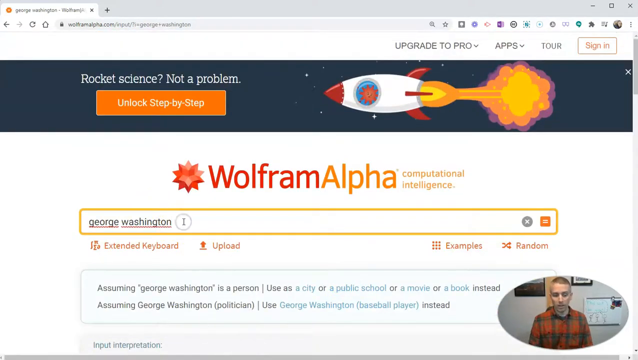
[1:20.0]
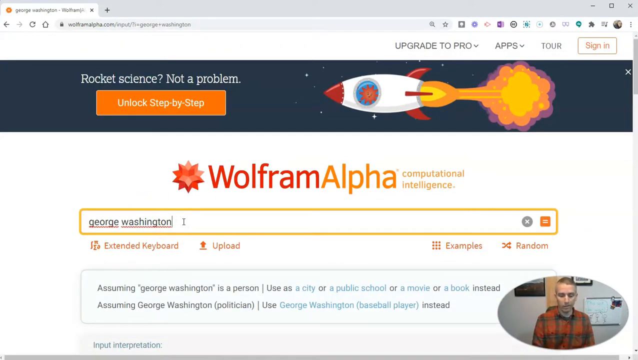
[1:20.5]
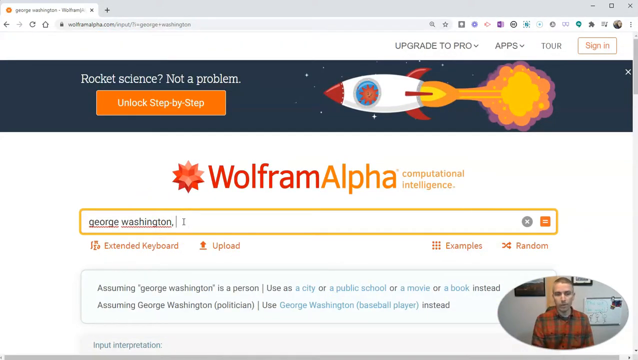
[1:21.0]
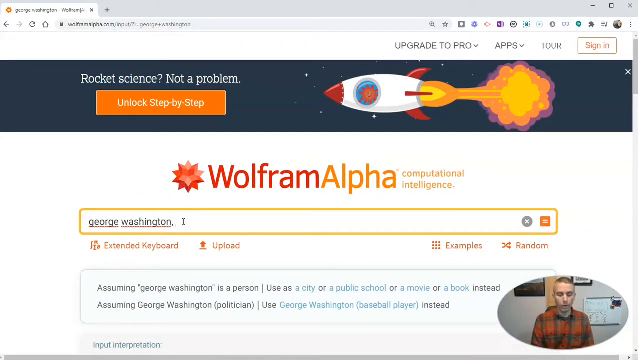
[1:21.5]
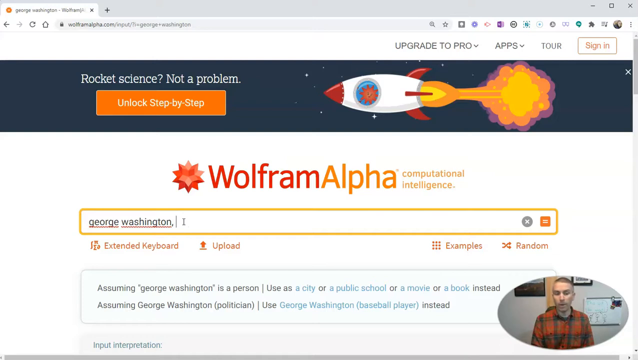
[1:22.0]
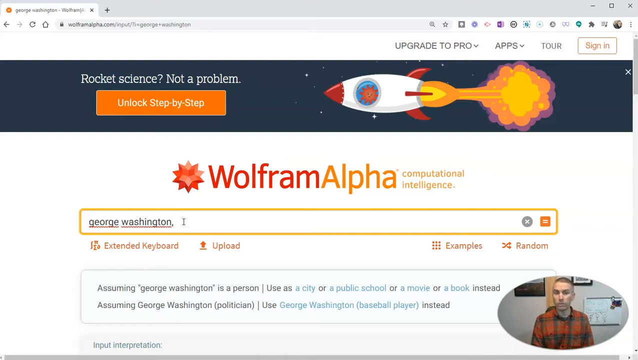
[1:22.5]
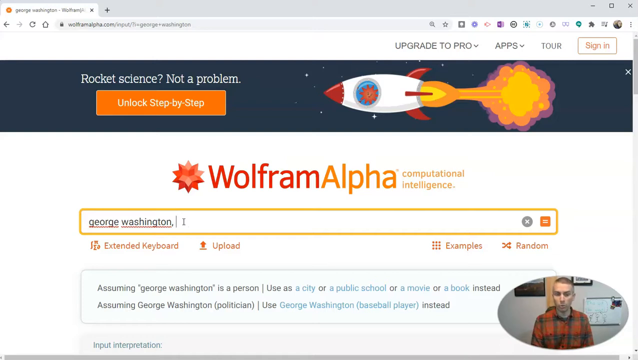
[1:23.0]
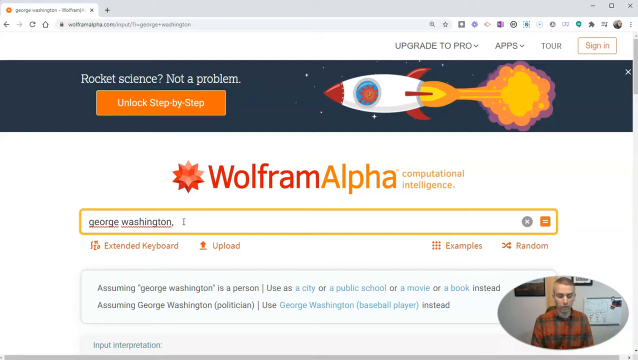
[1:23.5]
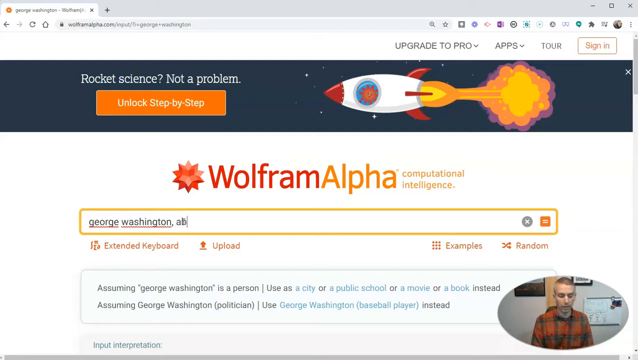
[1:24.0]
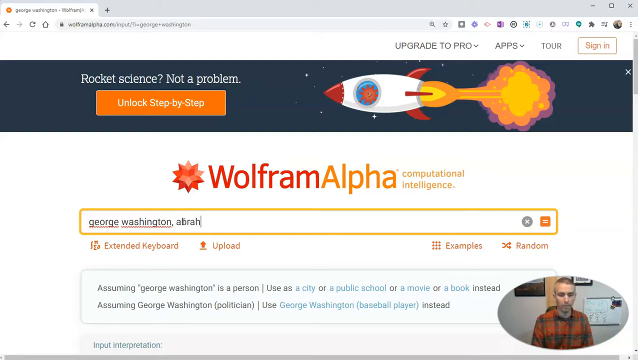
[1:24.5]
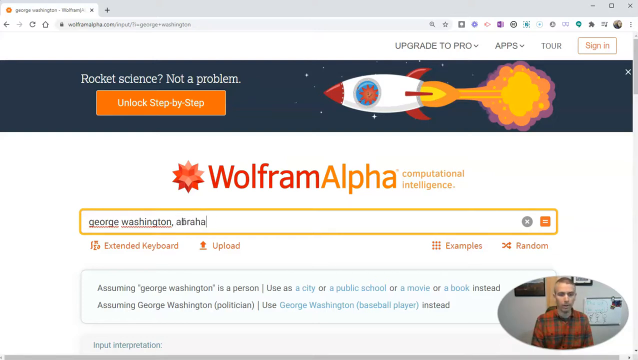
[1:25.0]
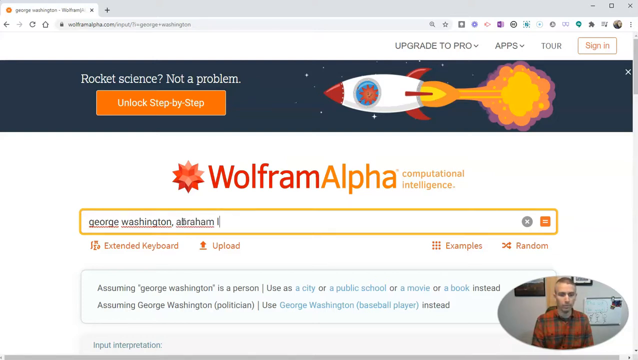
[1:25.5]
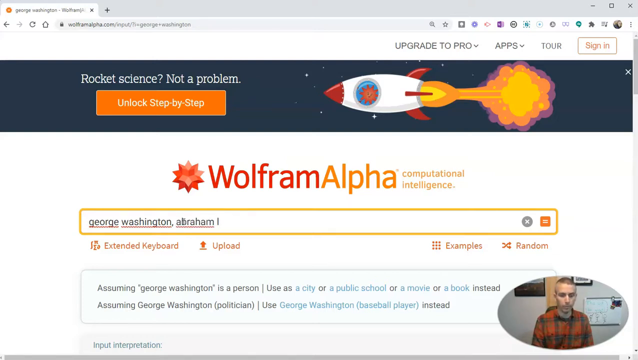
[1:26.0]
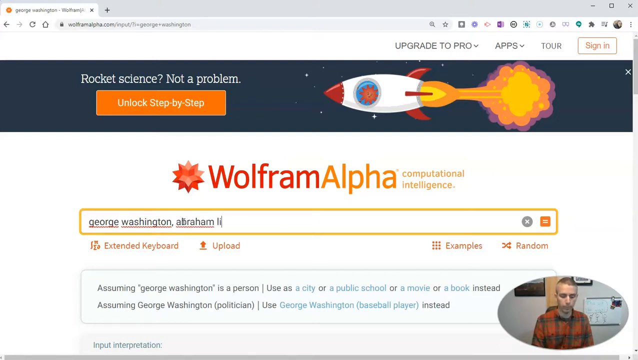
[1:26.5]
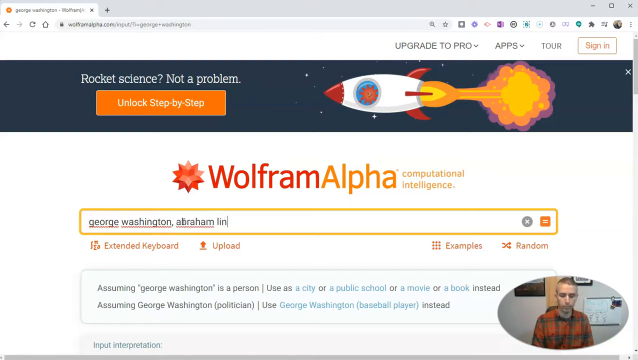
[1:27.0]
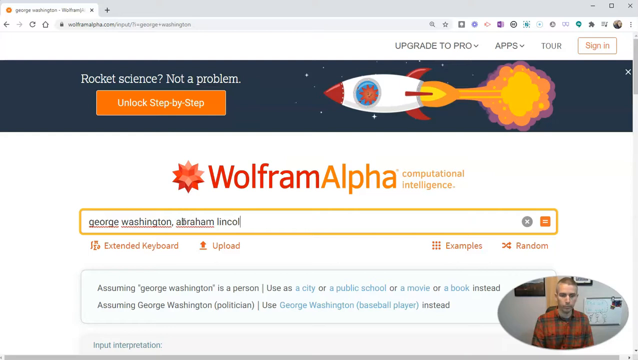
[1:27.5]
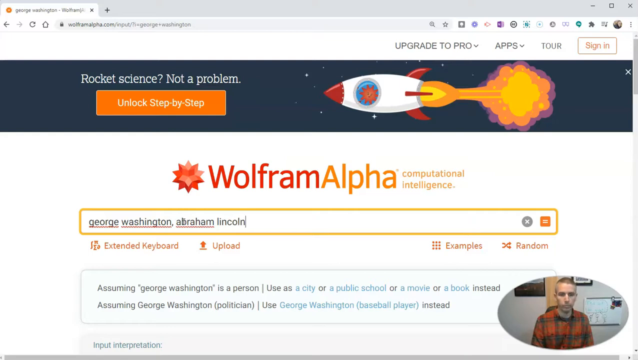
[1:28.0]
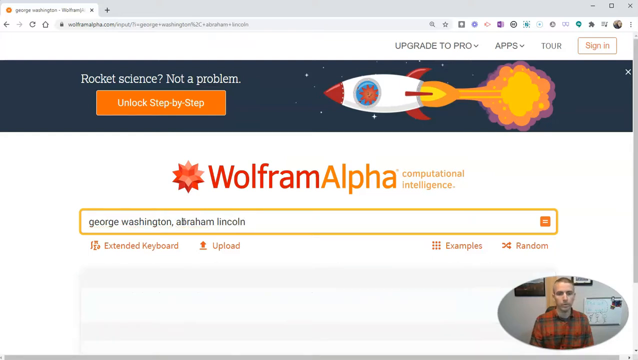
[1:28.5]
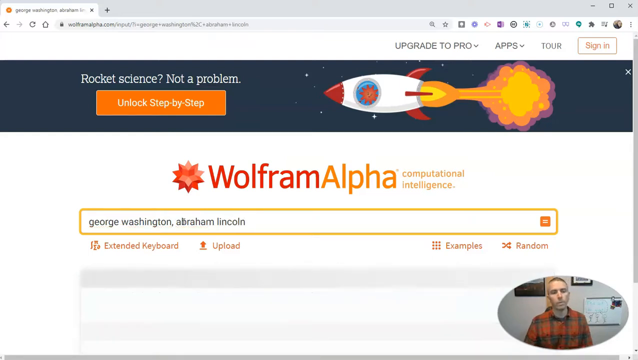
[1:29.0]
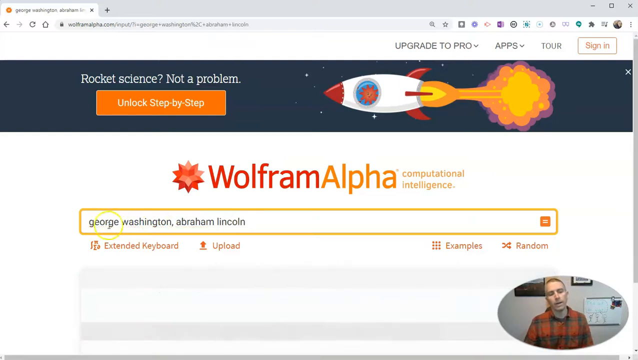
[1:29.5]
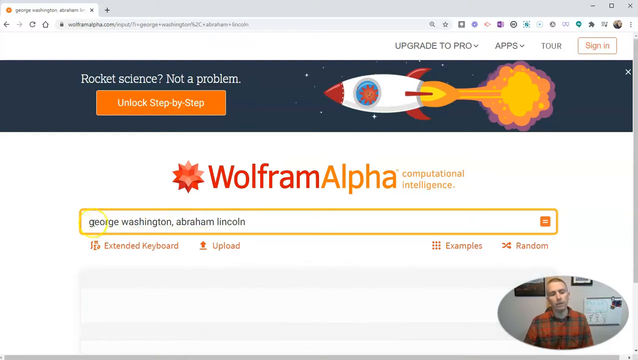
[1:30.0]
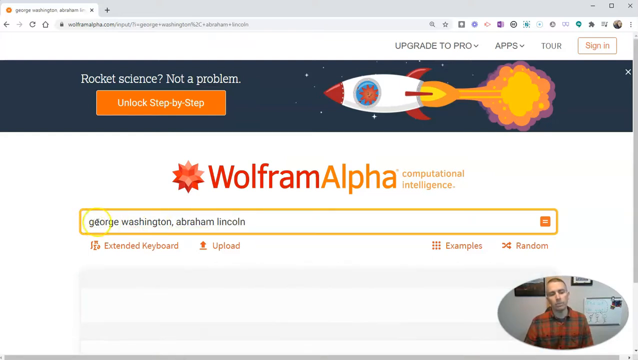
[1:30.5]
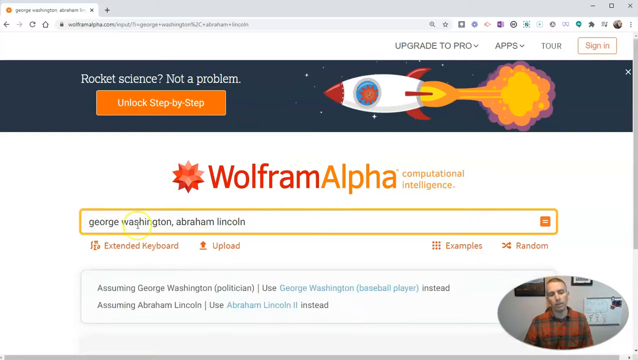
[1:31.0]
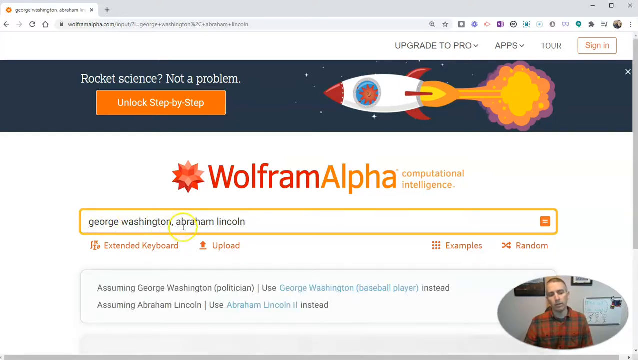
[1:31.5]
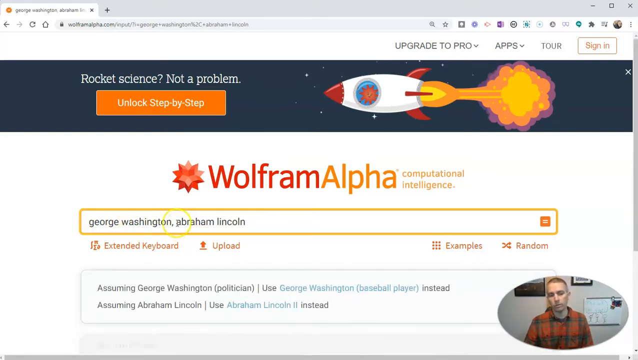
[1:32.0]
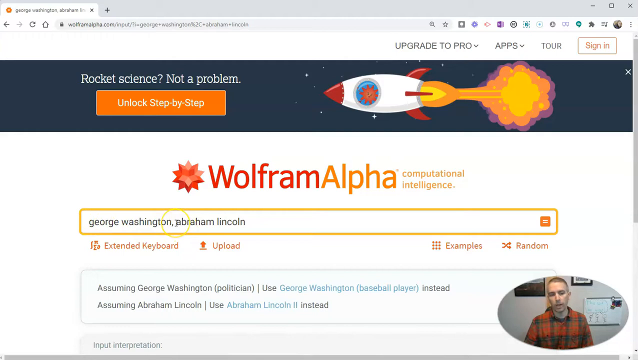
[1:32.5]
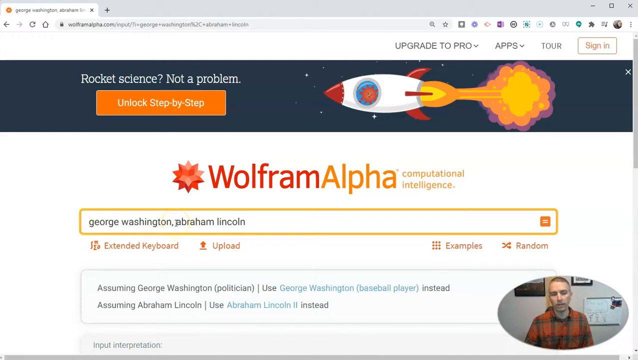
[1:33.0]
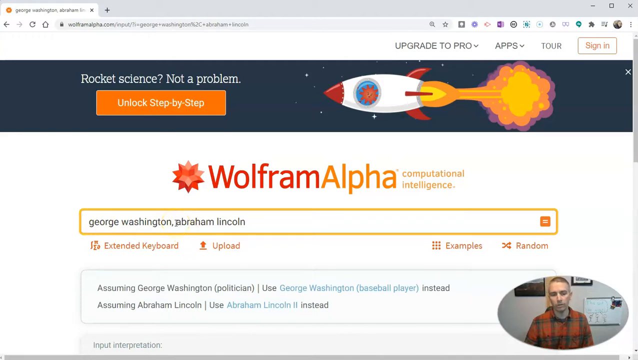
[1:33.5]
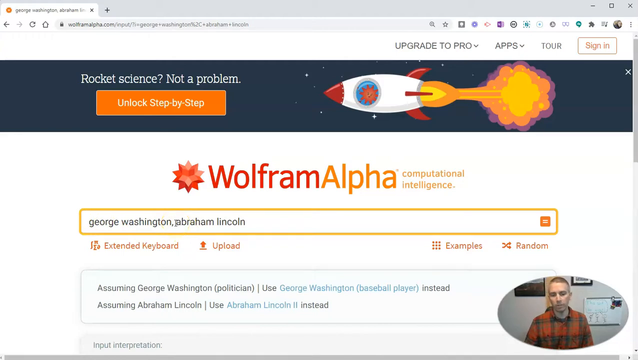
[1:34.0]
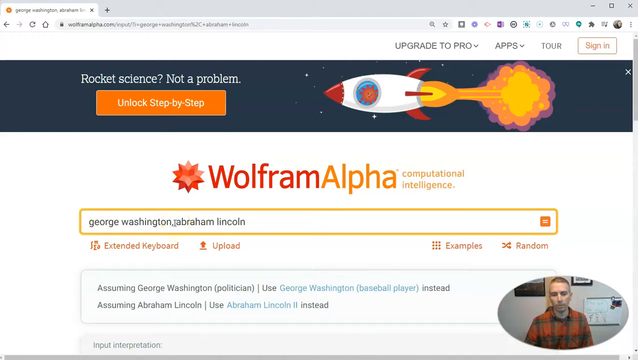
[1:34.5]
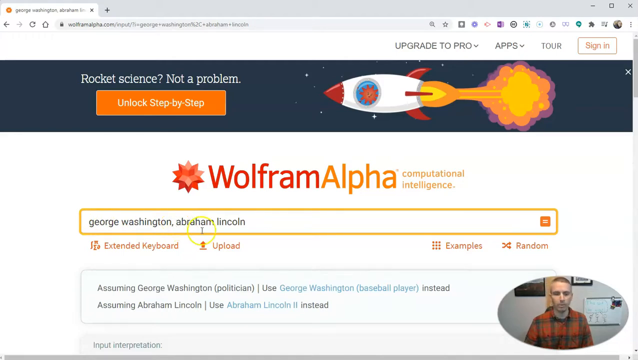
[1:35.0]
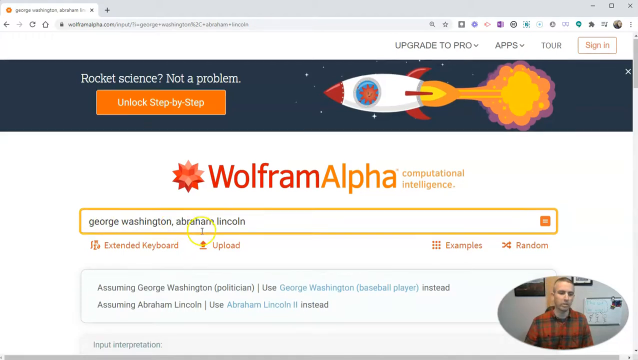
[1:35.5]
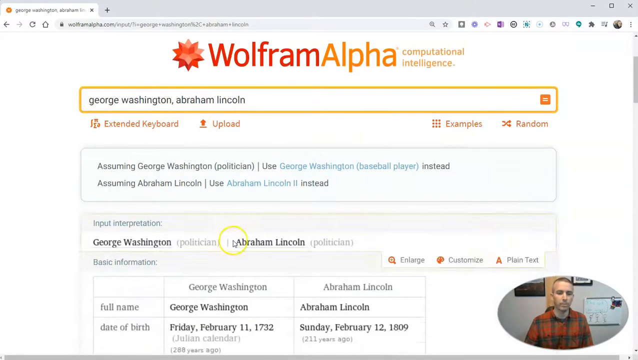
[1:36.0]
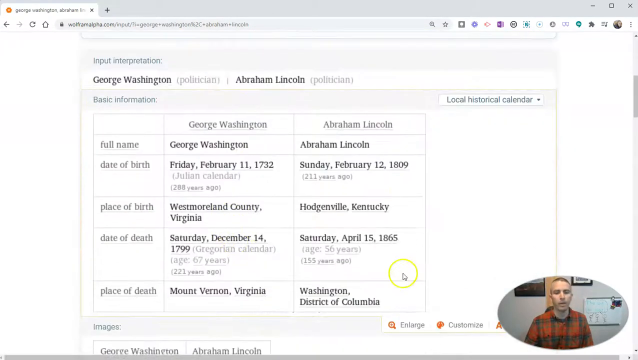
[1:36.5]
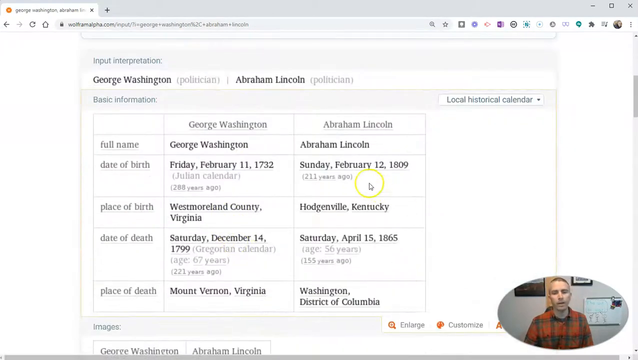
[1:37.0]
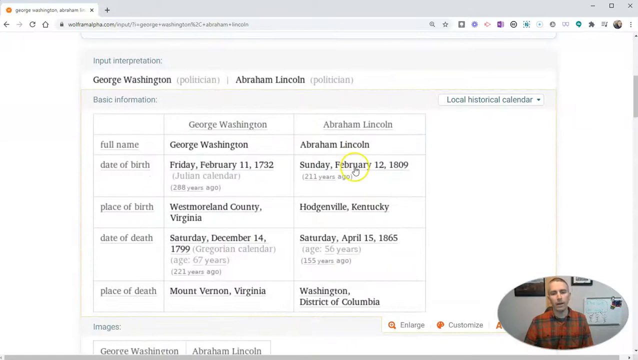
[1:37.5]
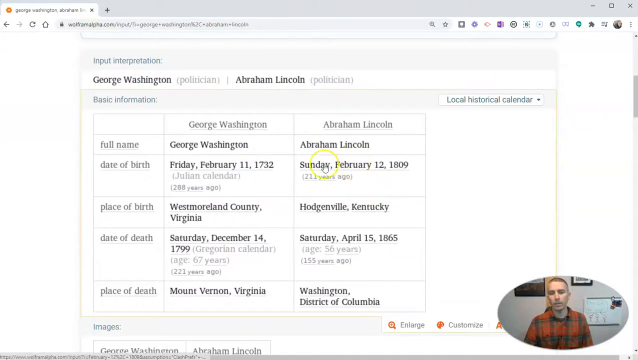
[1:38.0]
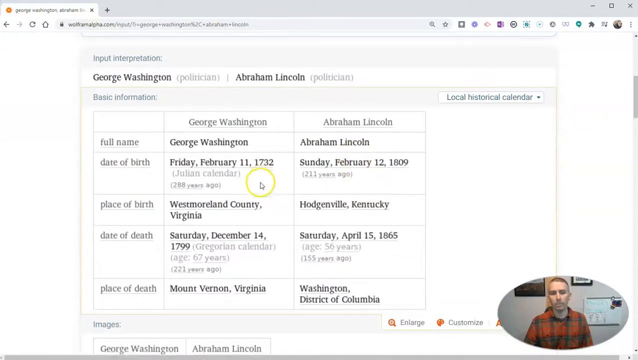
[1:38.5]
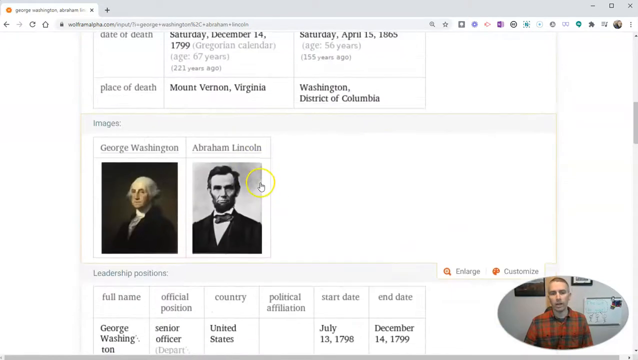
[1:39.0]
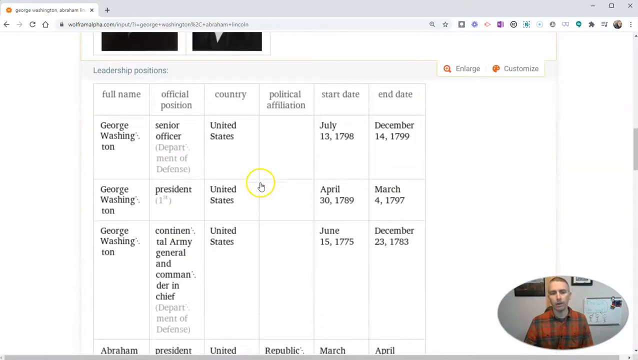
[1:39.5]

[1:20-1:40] On the Wolfram Alpha search engine, the user clicks inside the search box, which holds "George Washington", adds a comma and types "Abraham Lincoln", so both names are in the search box at once. The cursor moves around inside the search box, hovering over the two names. Scrolling down shows the input interpretation for George Washington and Abraham Lincoln, both listed as politicians. Some of the information appears to come from Wolfram Alpha, on a Wikipedia-style page that combines the two, with images of George Washington and Abraham Lincoln. Further down, the page compares them on full name, official position, country, political affiliation, and the start date and end date of their presidency.